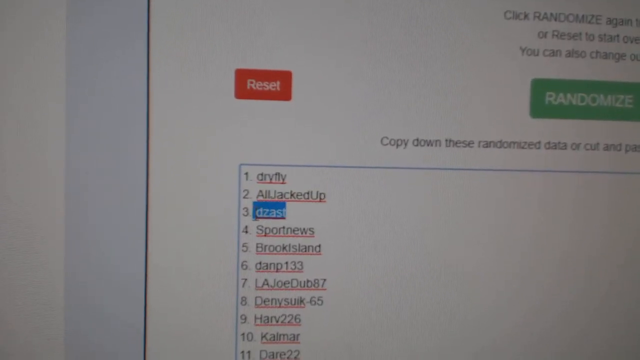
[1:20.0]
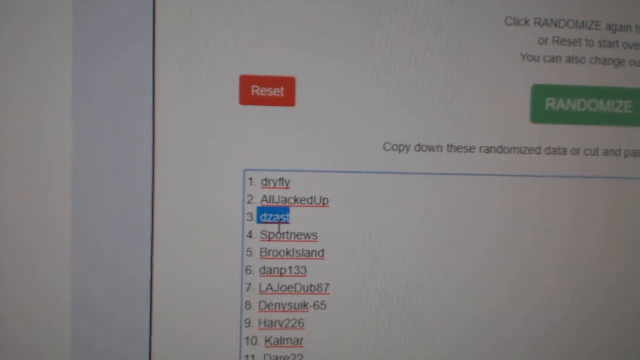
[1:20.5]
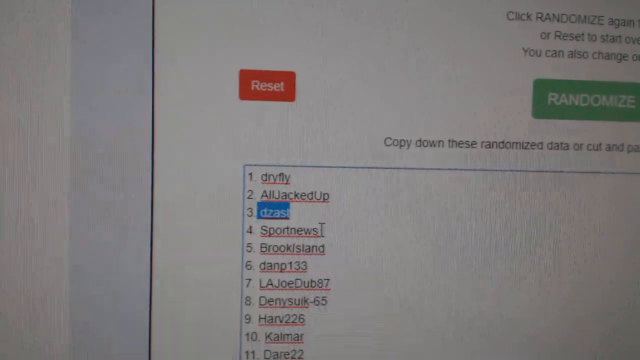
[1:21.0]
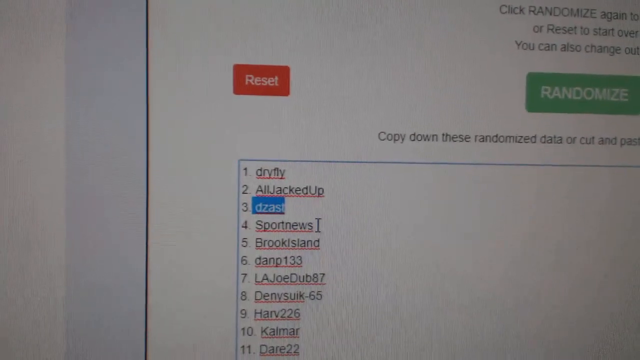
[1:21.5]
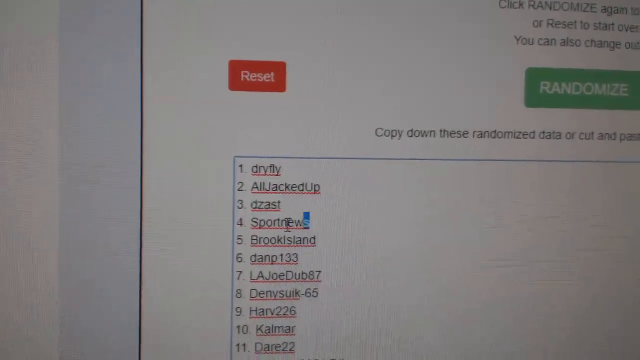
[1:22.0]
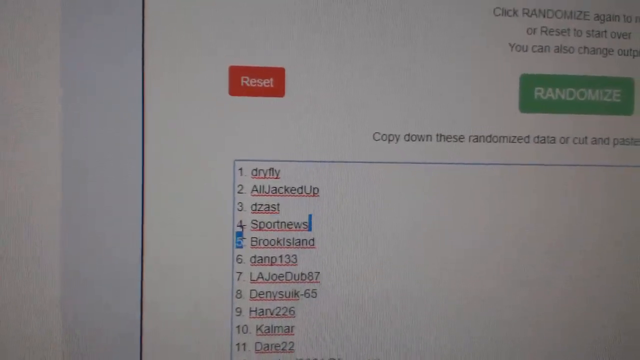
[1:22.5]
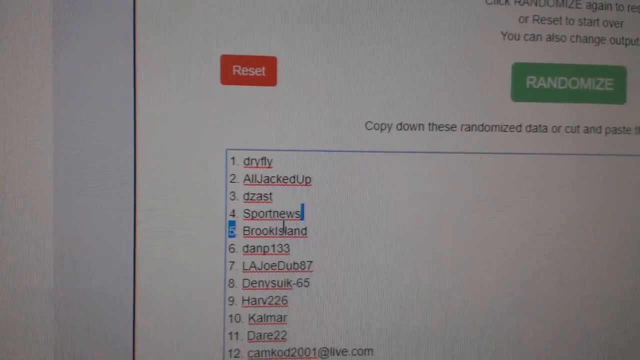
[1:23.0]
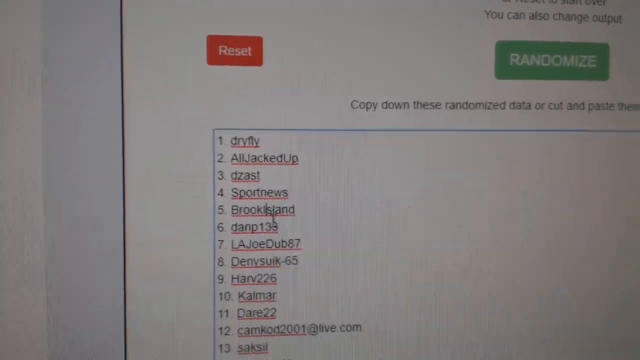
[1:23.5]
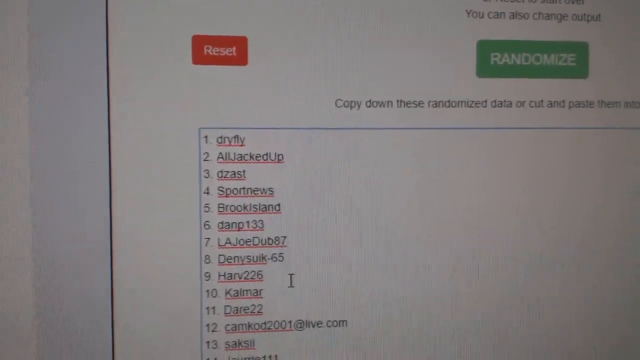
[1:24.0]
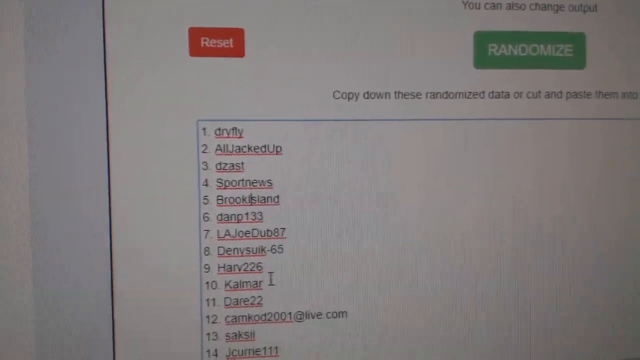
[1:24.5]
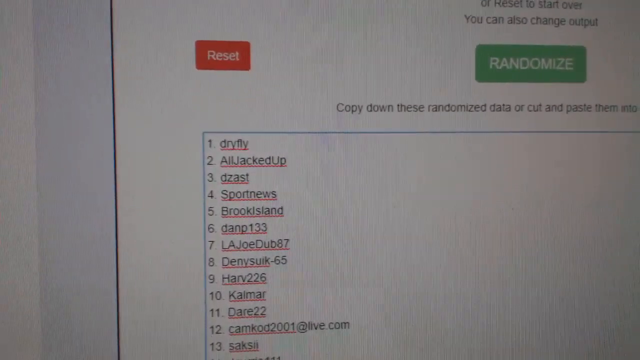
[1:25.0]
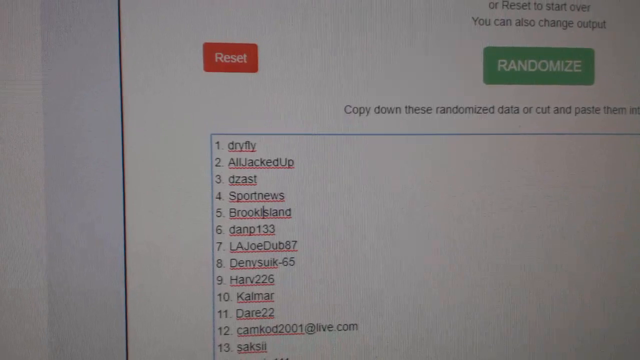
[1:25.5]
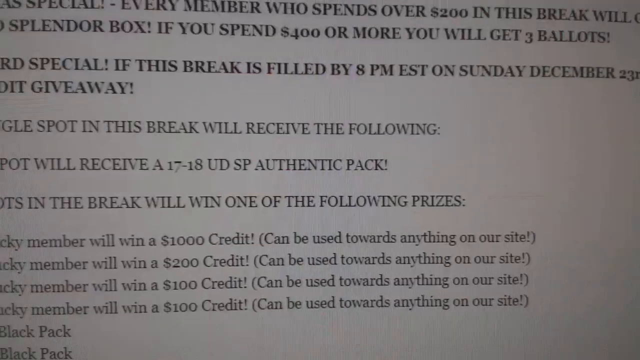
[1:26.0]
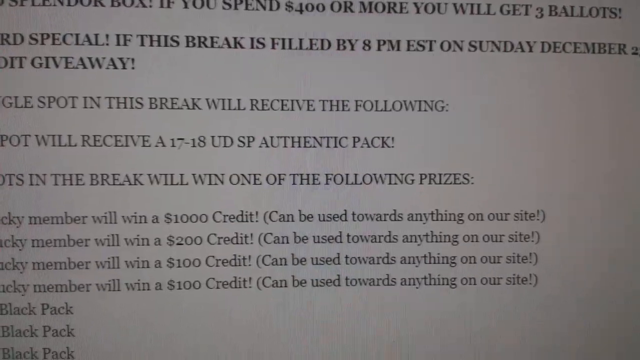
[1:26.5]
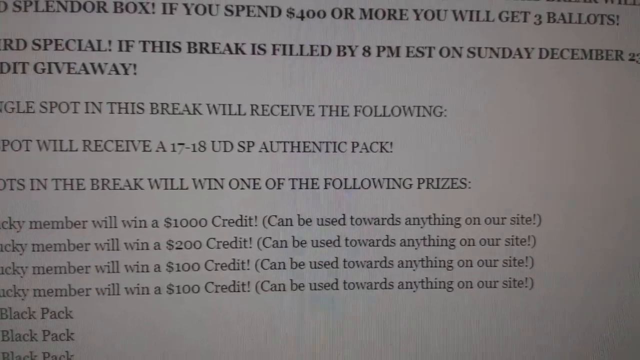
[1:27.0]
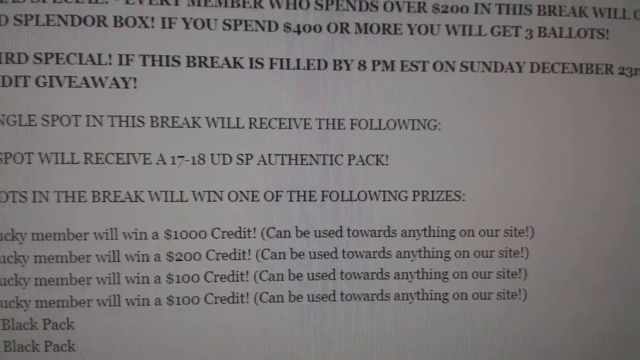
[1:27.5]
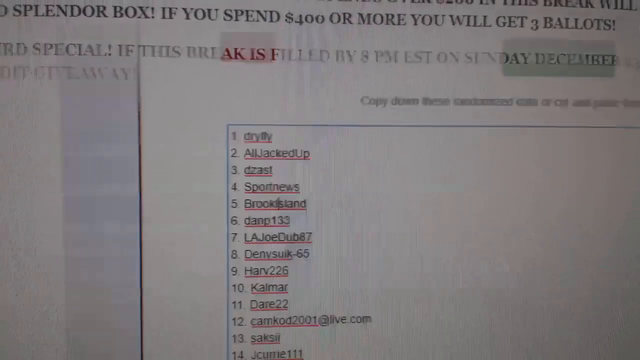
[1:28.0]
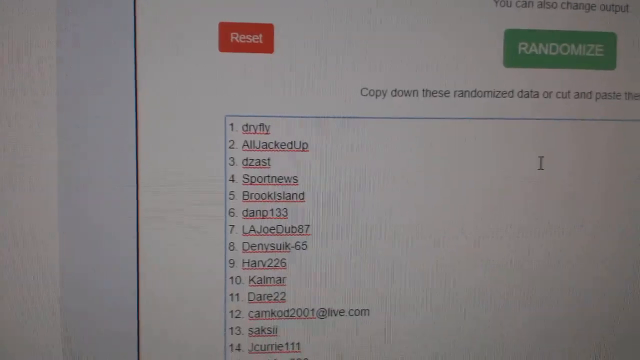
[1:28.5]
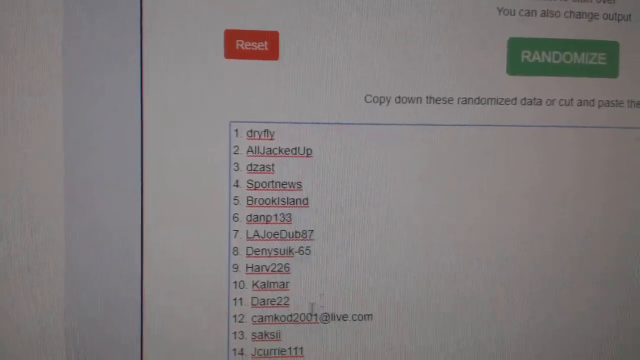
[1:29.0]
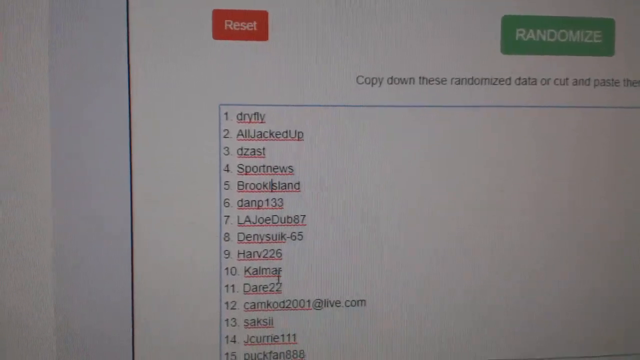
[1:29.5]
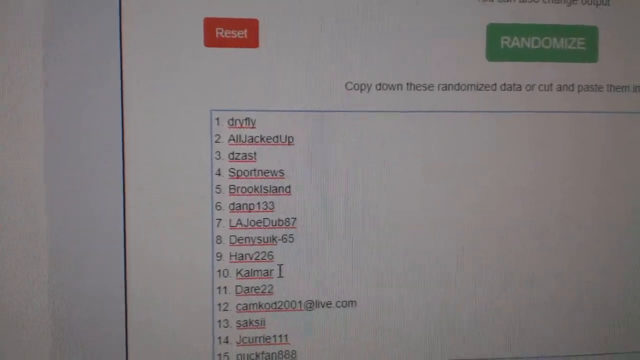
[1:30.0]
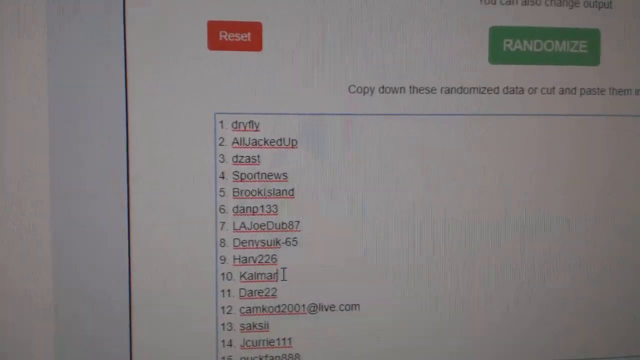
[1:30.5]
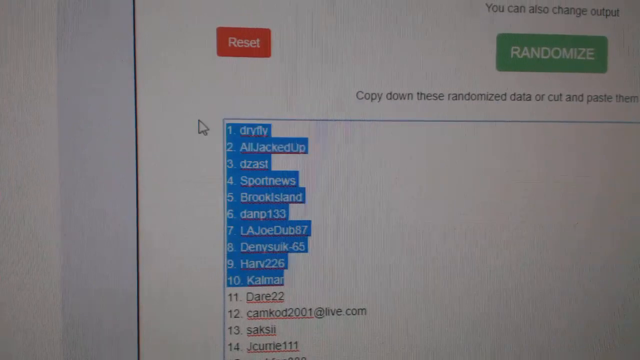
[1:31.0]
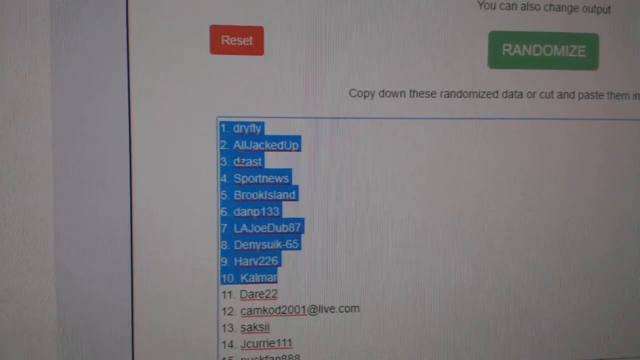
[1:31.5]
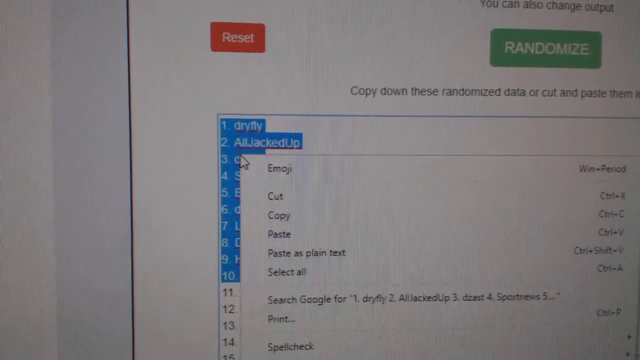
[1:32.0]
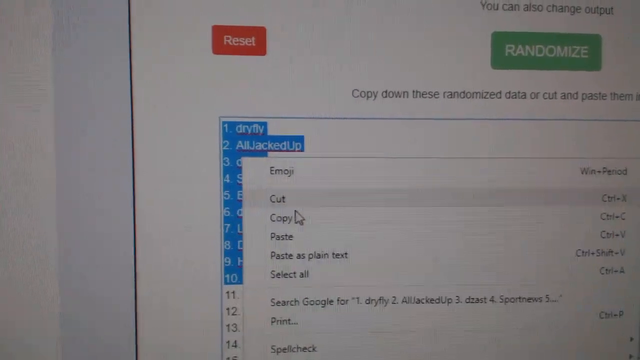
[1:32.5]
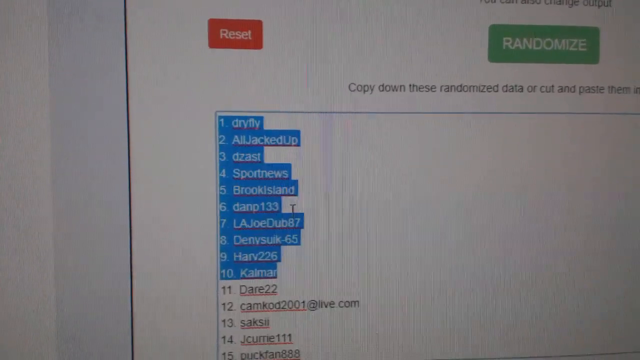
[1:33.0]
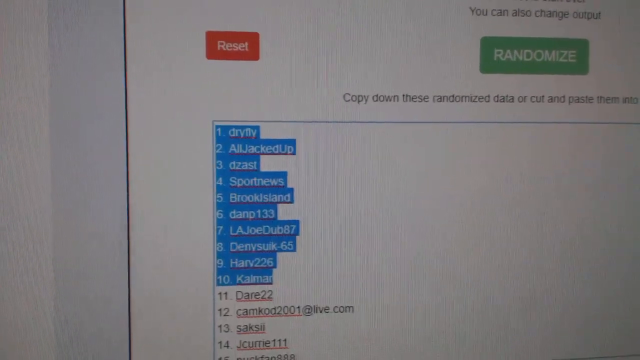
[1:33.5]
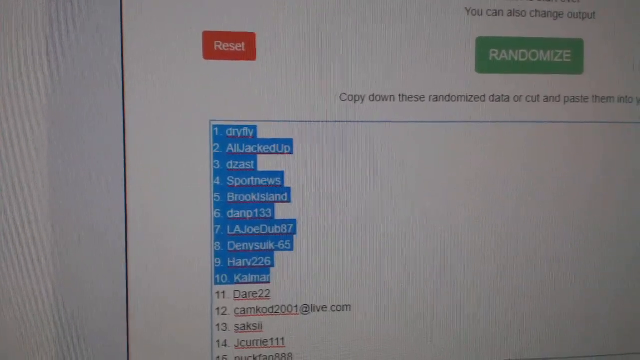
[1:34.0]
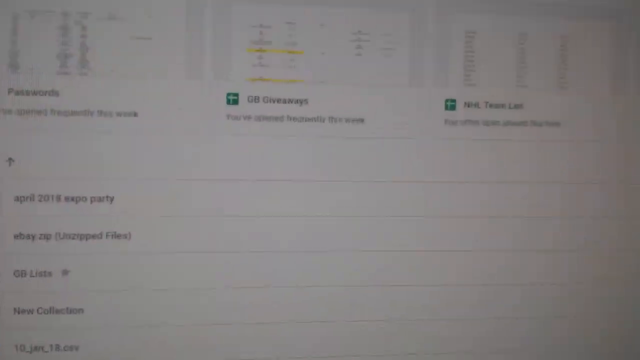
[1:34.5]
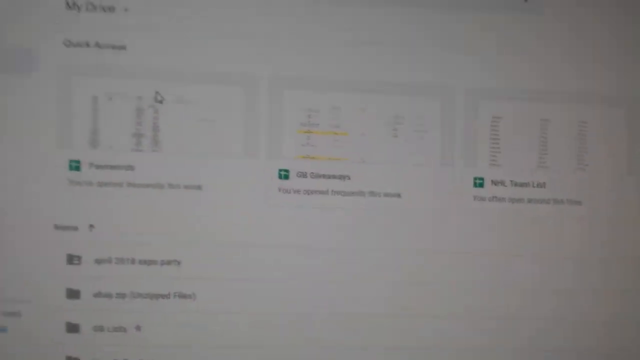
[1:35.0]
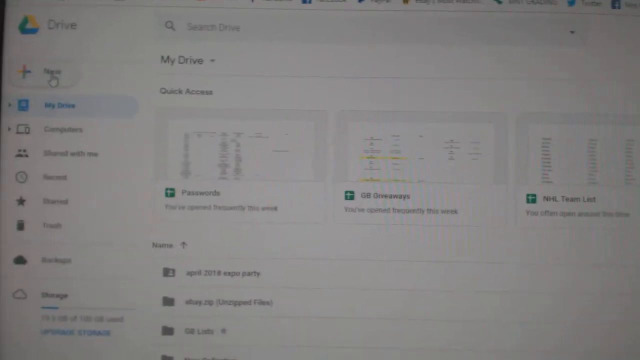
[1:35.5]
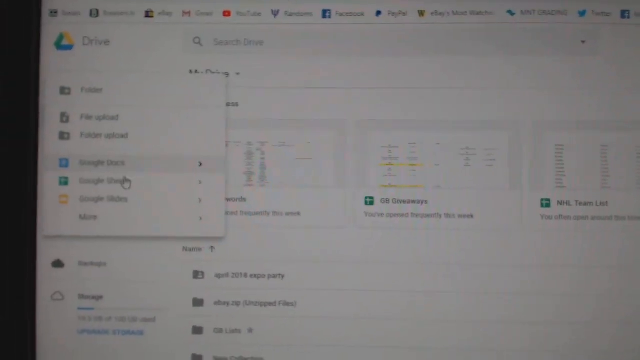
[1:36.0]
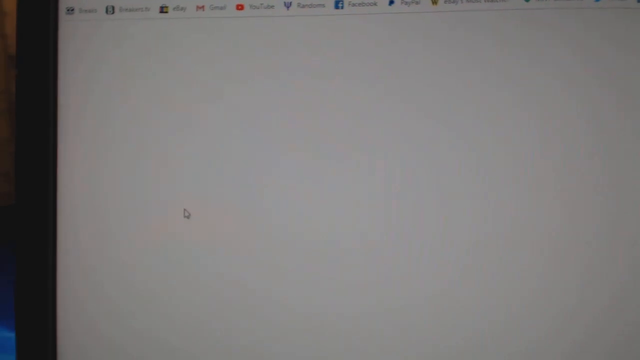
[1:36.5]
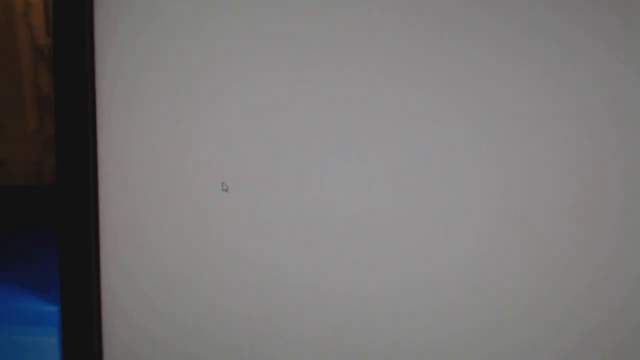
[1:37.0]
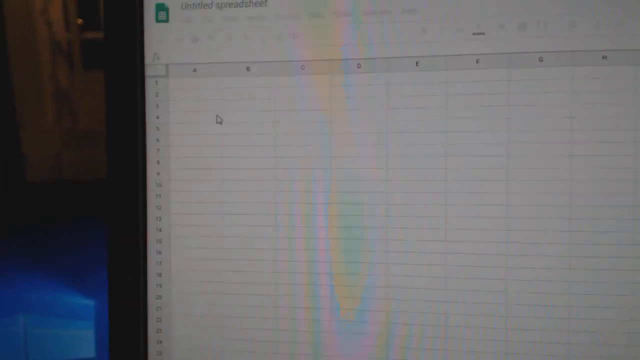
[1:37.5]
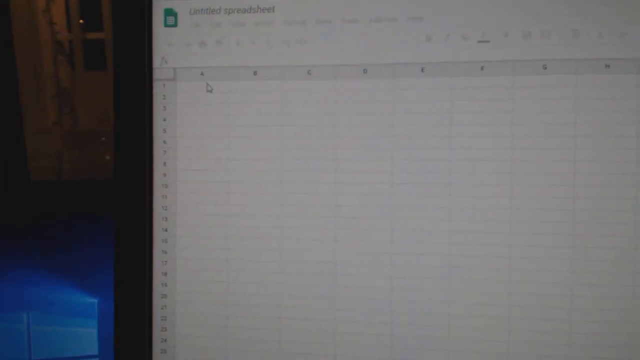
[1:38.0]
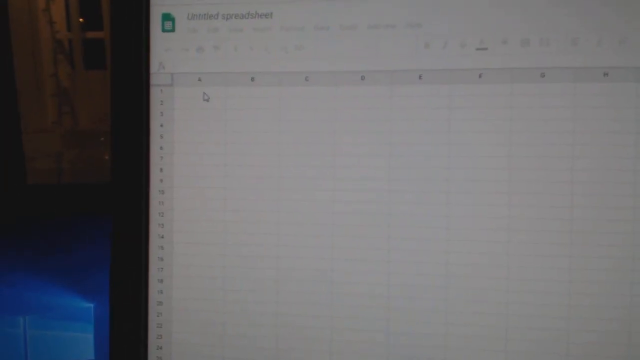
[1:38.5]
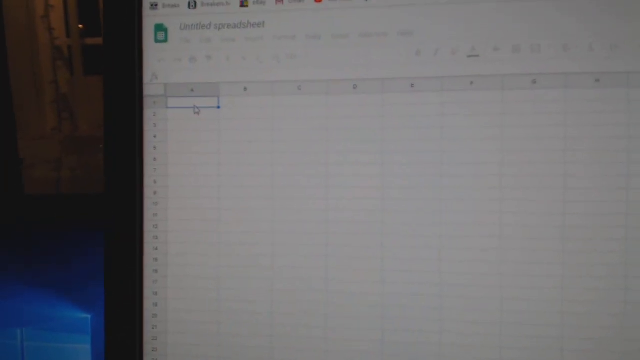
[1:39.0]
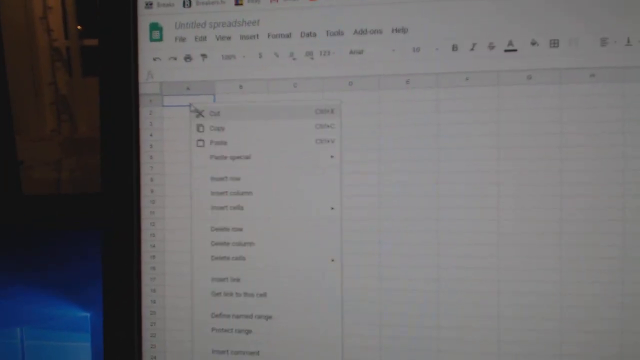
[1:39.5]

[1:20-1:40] In the upper right-hand corner of what looks like a box, "randomize" appears in white text in a green rectangle, with a red rectangle reading "reset" in white text on the other side. Below is a numbered list of what almost look like usernames, including "Dry fly", "all jacked up", "DZ" and "AST", with others hard to read. A mouse cursor selects them. The view then shows some text that is cut off, seemingly about maybe an award, something people can win. Back on the list, many entries are selected and the person right-clicks to copy. The view then moves to Google Sheets. Just enough of the area outside the screen is visible to confirm the video is being filmed with a camera pointed at the computer screen, including a black monitor or possibly a laptop top. The person begins to paste into the Google Sheet but has not pasted yet.